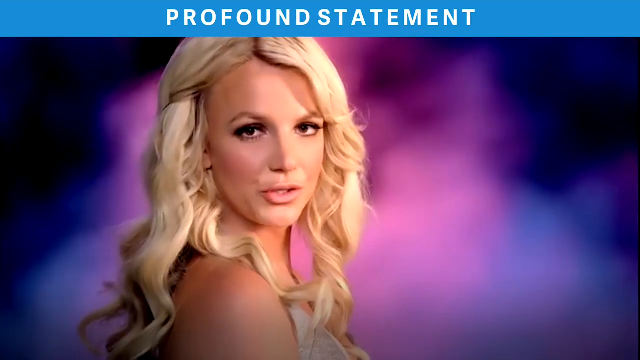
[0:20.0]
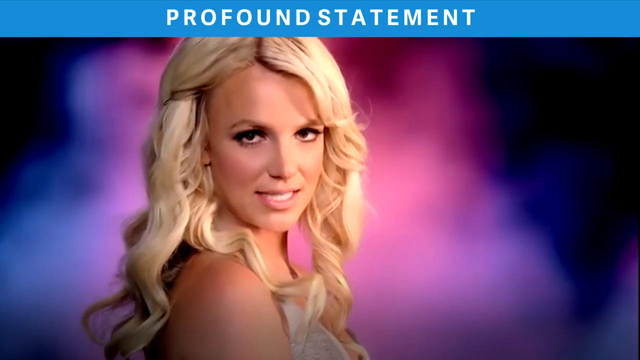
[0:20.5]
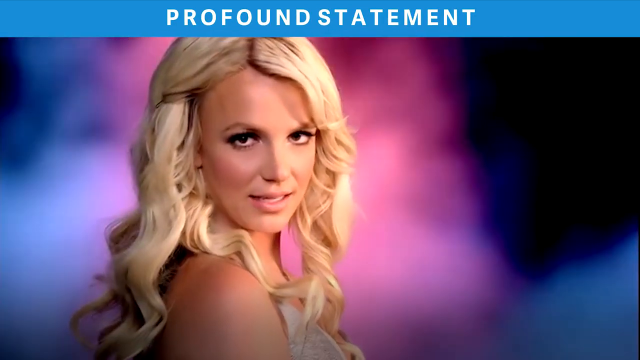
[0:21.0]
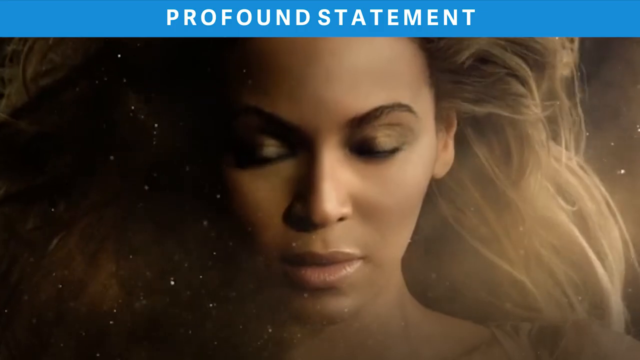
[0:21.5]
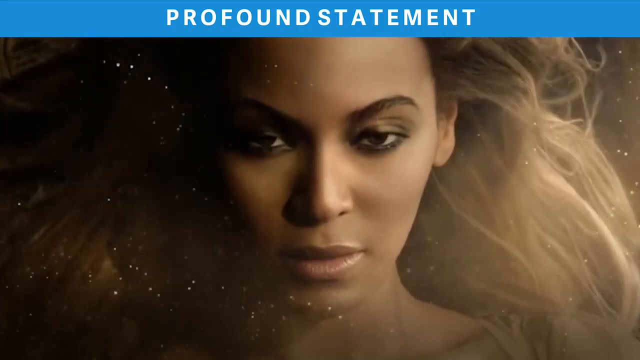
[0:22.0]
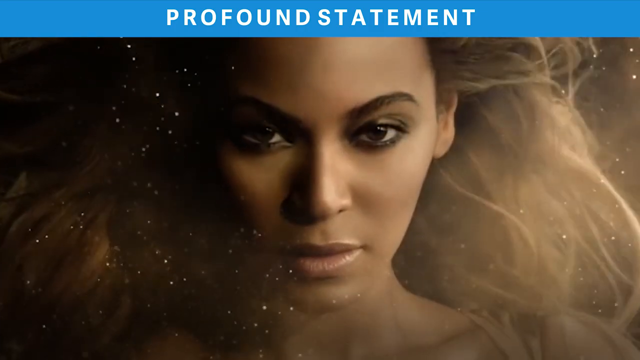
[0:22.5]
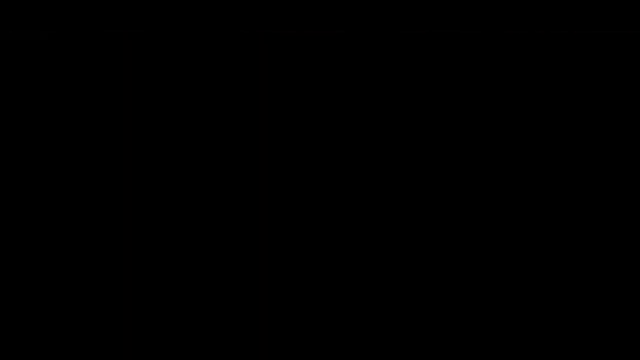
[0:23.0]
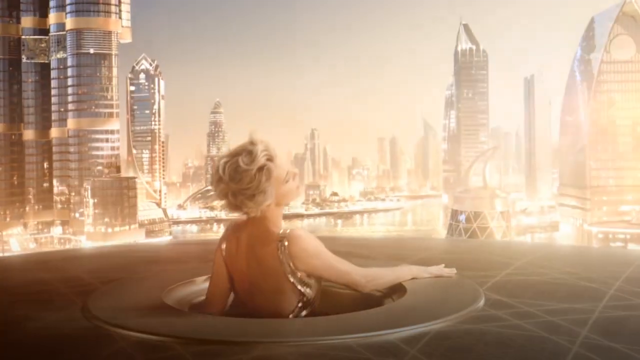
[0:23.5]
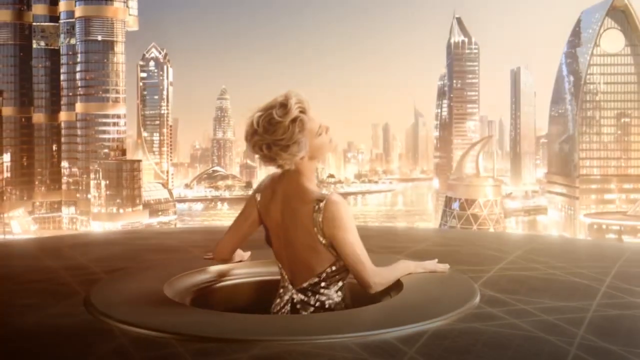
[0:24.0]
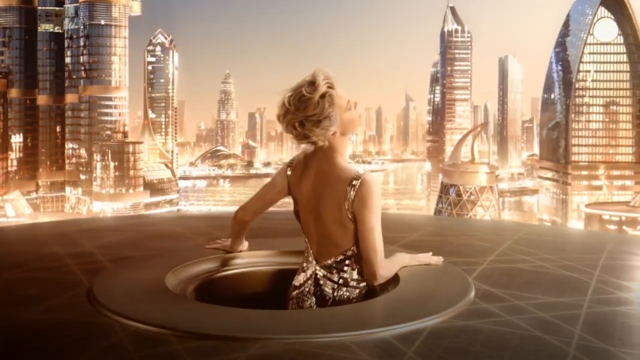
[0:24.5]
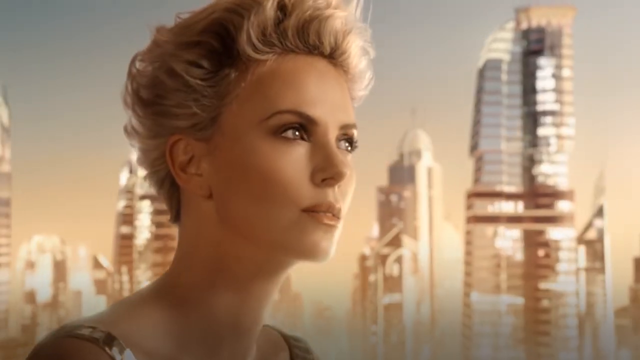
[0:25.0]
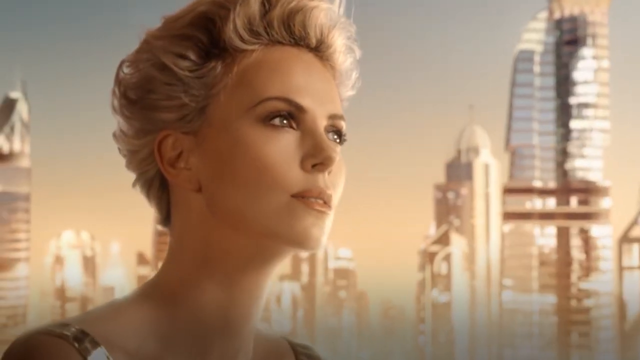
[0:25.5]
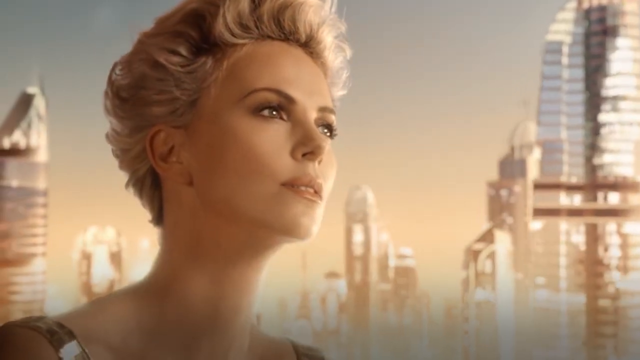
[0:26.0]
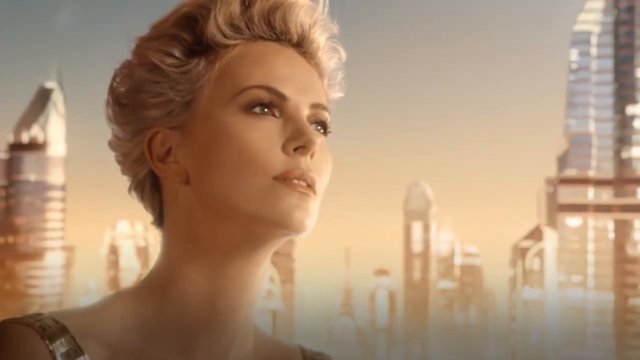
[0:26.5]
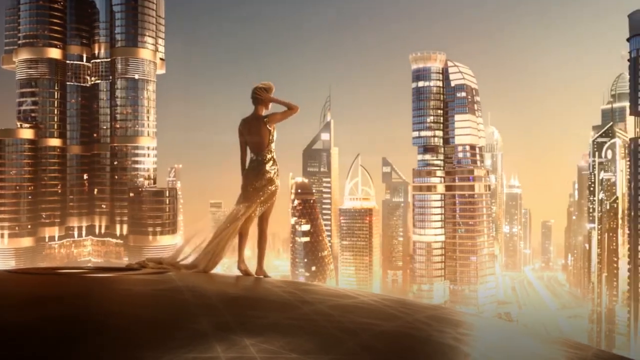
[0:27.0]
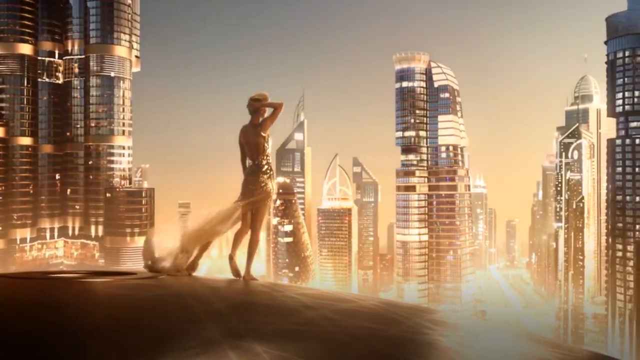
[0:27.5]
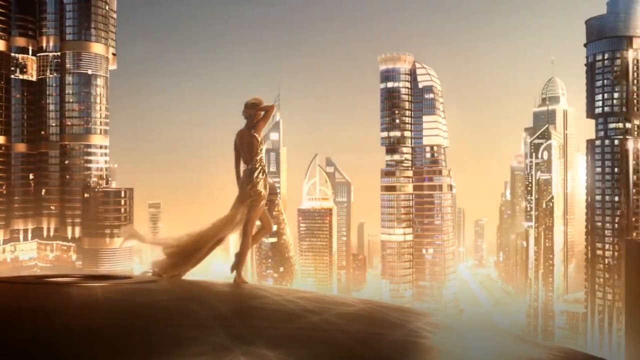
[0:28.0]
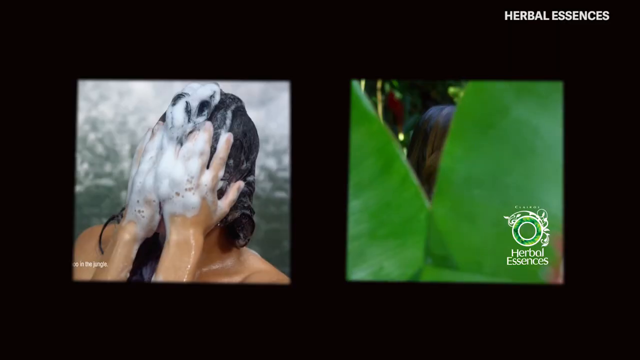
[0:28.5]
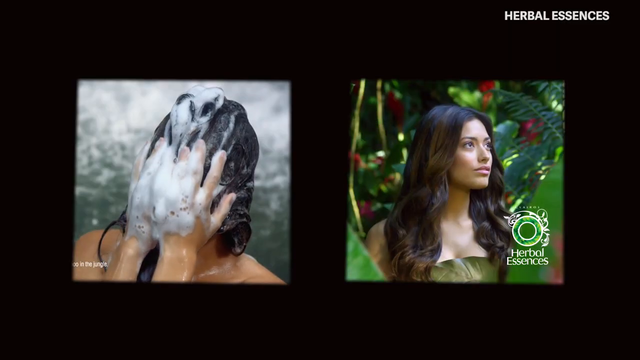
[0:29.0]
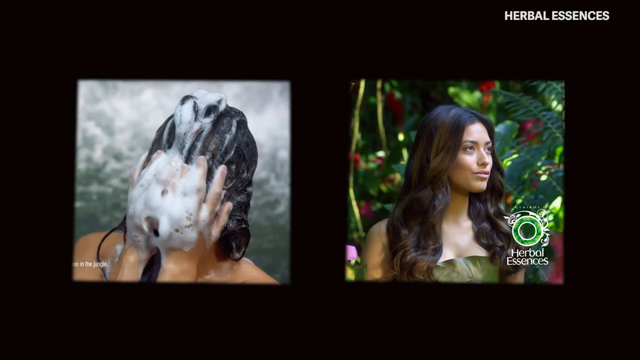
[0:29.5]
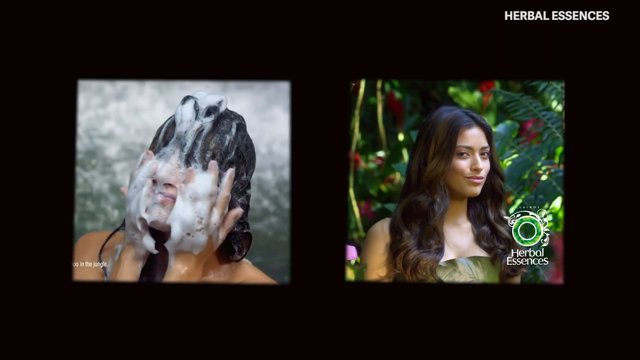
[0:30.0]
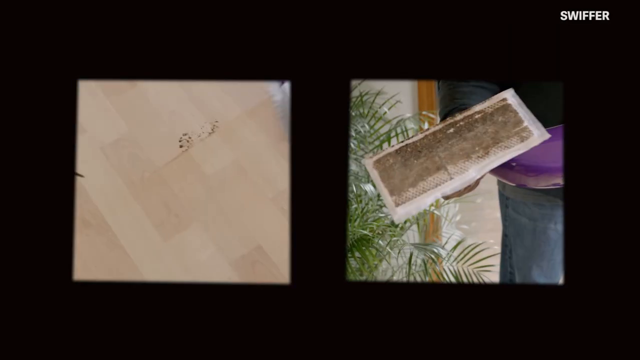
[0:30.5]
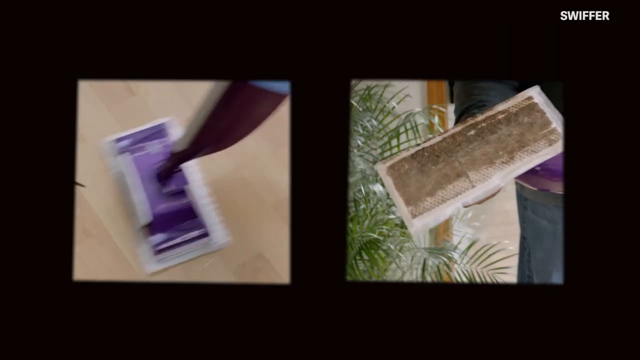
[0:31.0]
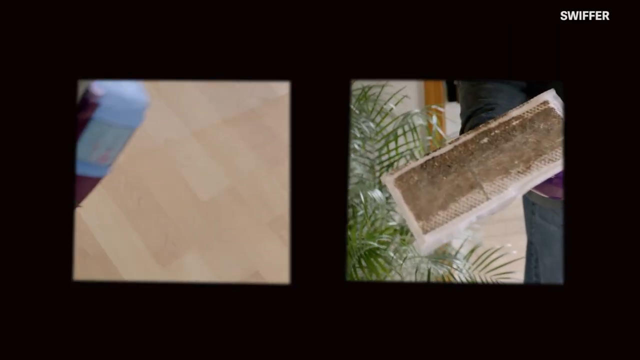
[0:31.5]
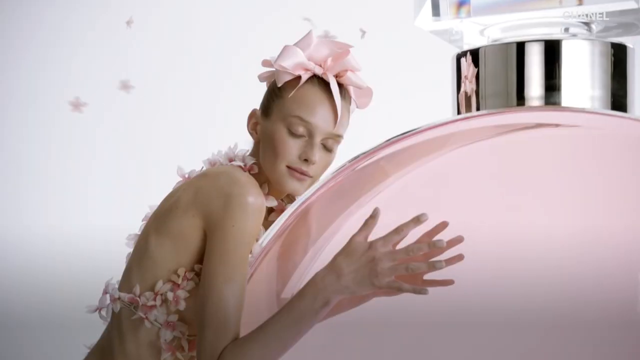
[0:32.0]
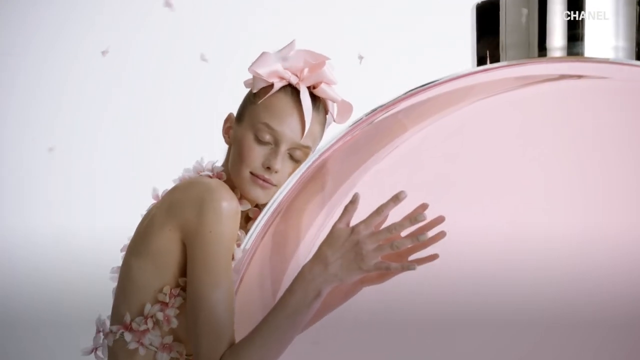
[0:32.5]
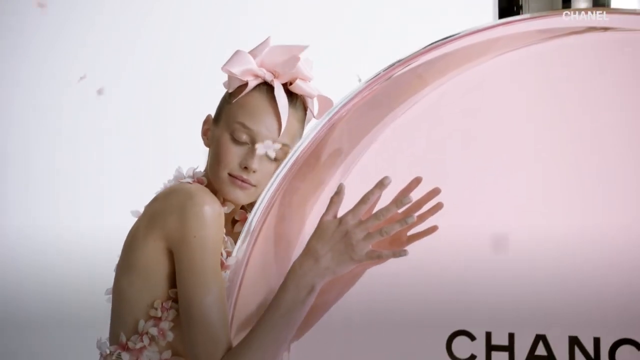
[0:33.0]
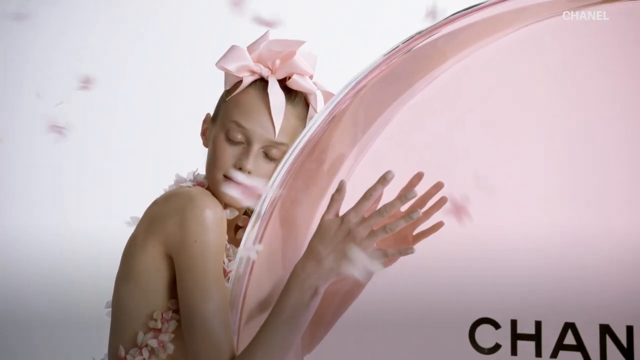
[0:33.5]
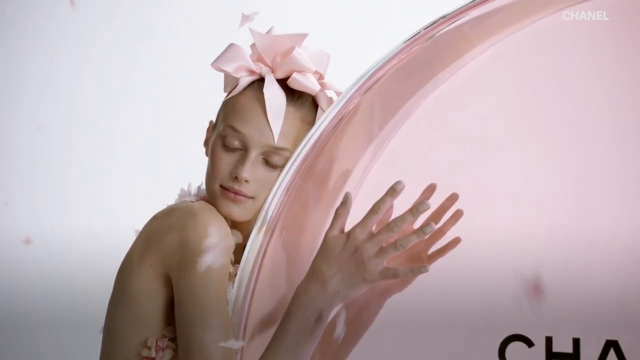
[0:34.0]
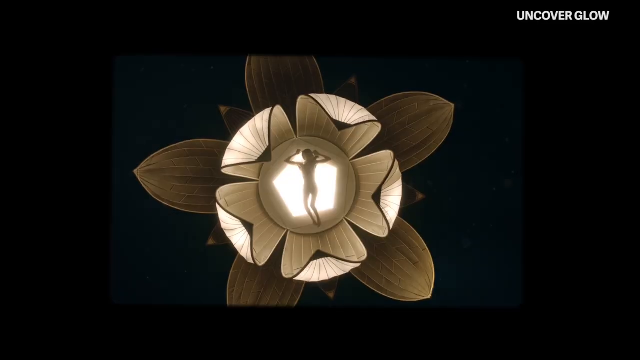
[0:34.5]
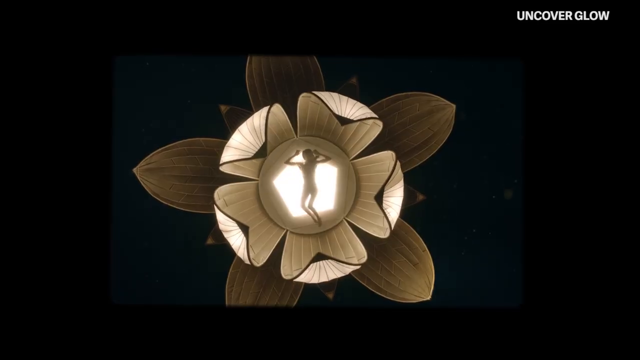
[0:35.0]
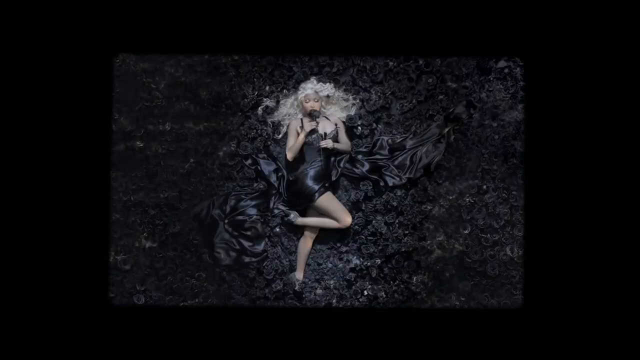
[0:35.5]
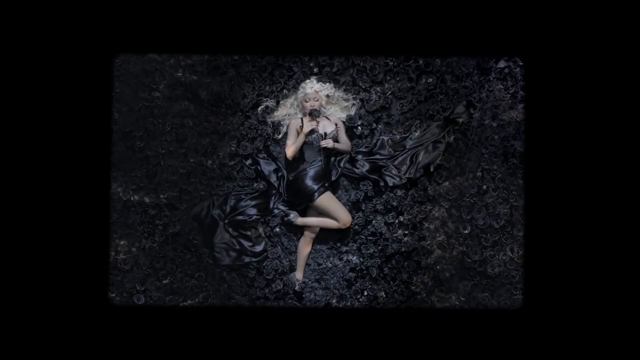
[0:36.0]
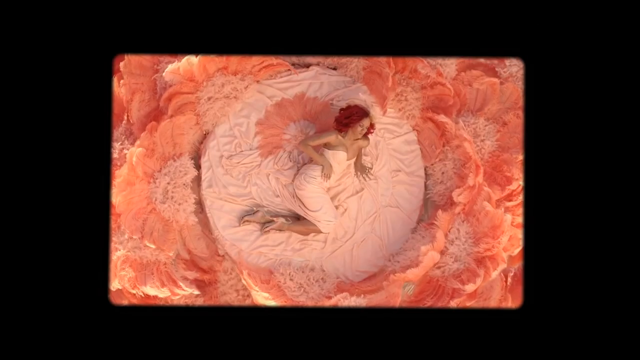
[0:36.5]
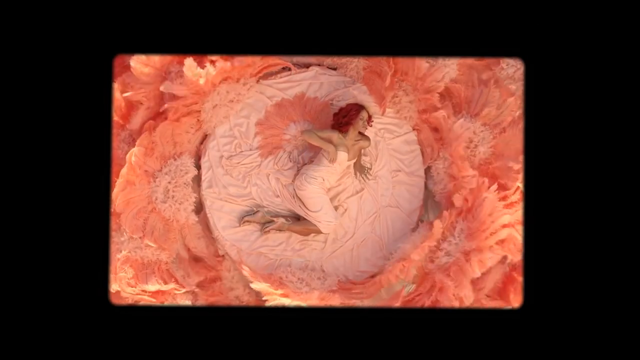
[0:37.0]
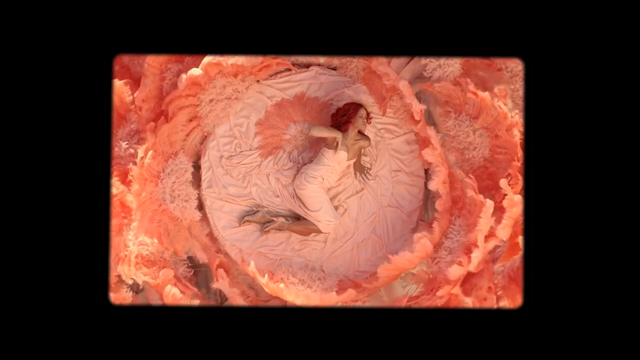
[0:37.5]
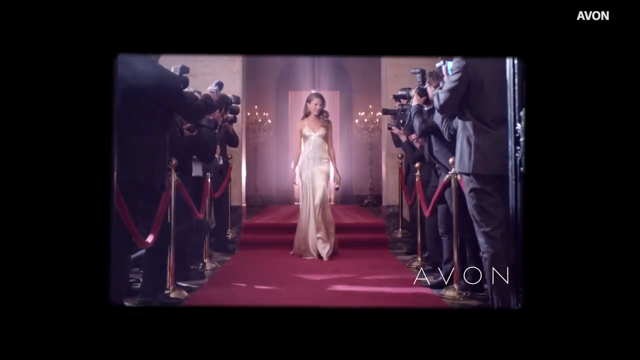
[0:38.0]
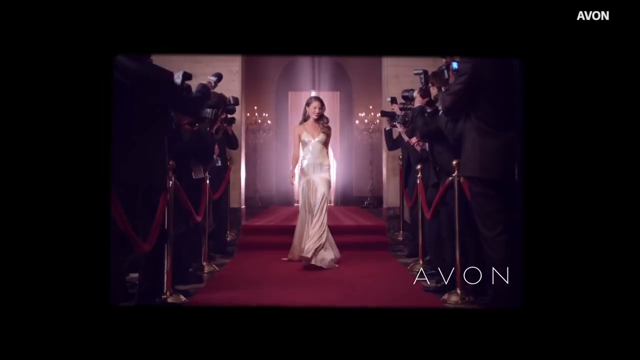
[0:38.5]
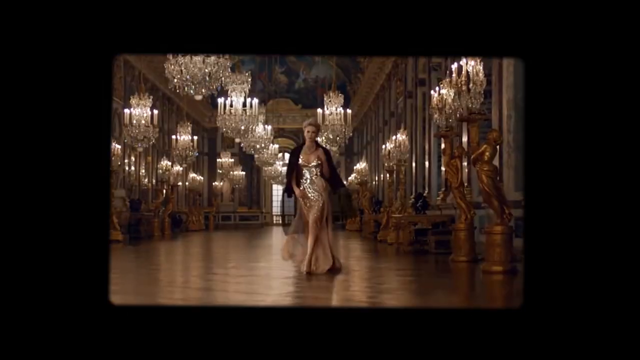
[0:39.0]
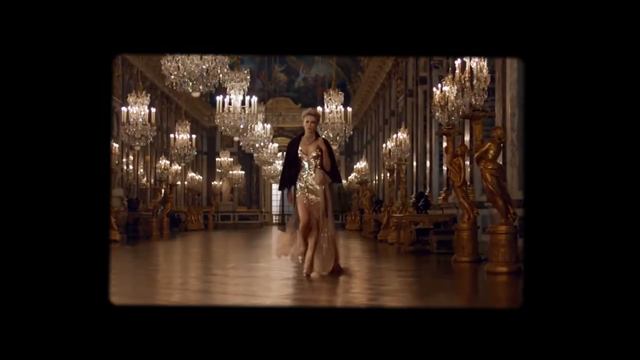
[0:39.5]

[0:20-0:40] At the top, a light blue stripe runs across with white text in all capital letters reading "profound statement." Britney Spears appears with pinkish-purplish smoke behind her, talking. The camera zooms in on Beyonce, apparently in another perfume ad, with glitter flowing around her face as the wind blows. An unnamed actress comes out of something like a sunroof that appears to be on a house; she looks up at many buildings and stands there wearing a dress. The video switches to ads for the Swiffer mop and Herbal Essence shampoo and hair products, then returns to someone holding the side of a pink perfume bottle. Celebrities lie down: Nicki Minaj lies against a black background, and Rihanna lies on what looks like a round pink bed matching her dress, with feathers all around her and some on the bed, apparently in the shape of a fan. Then an actress runs inside.